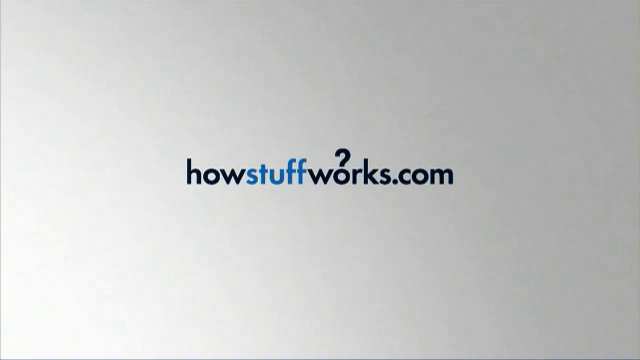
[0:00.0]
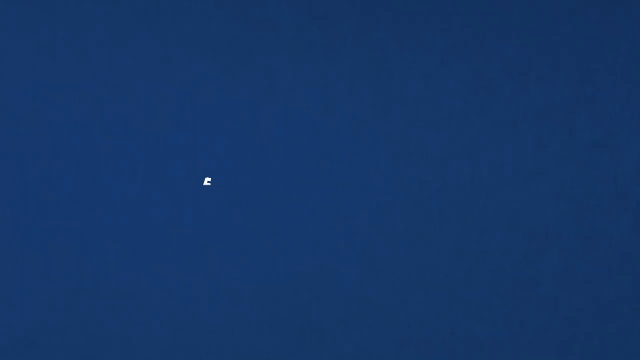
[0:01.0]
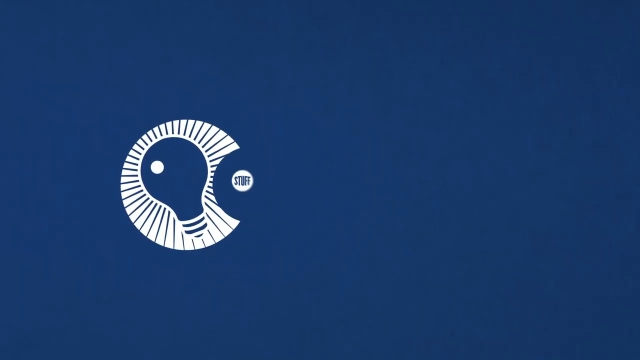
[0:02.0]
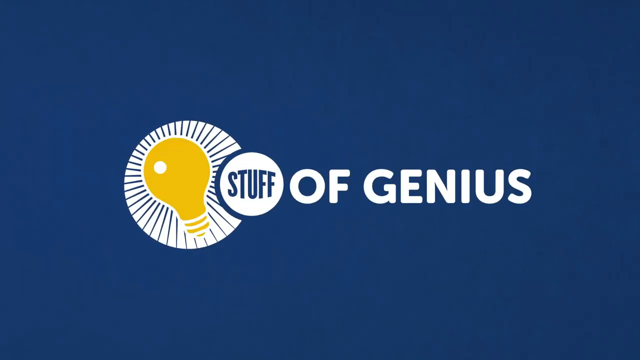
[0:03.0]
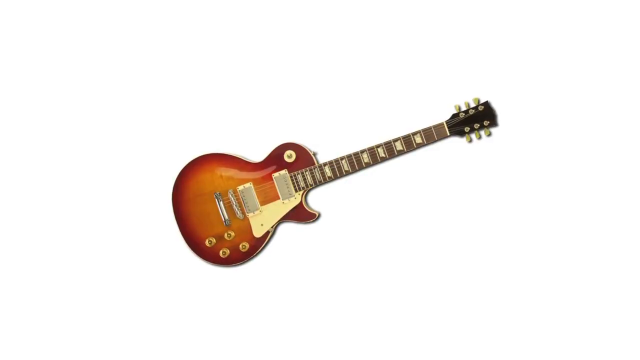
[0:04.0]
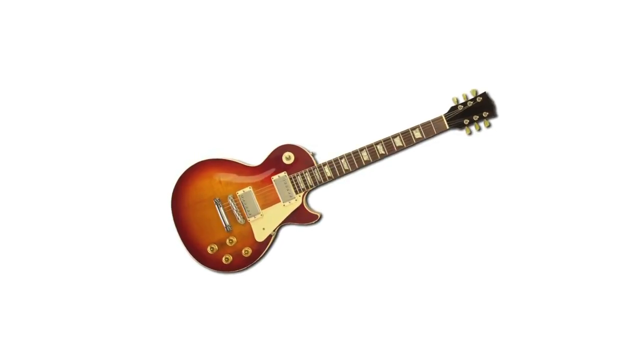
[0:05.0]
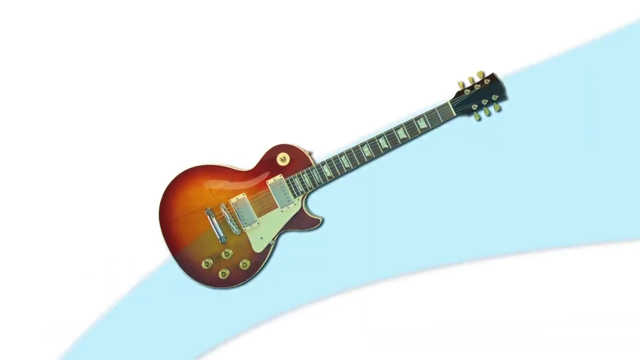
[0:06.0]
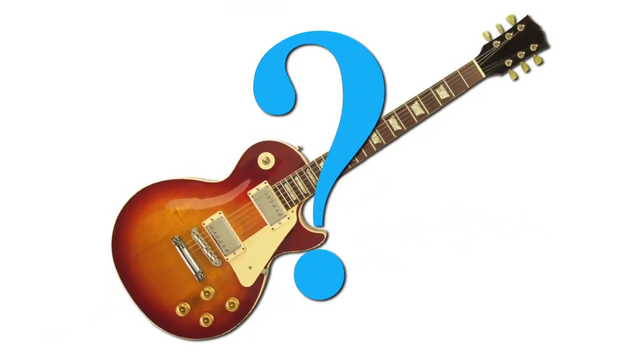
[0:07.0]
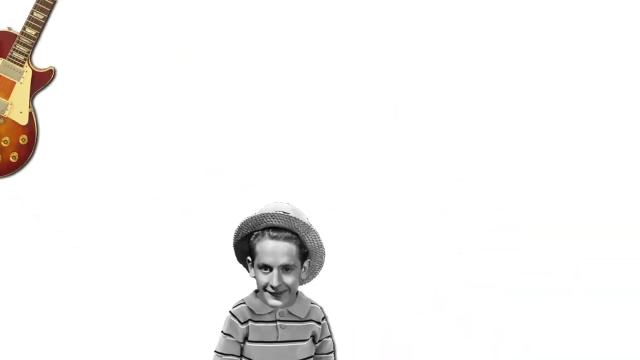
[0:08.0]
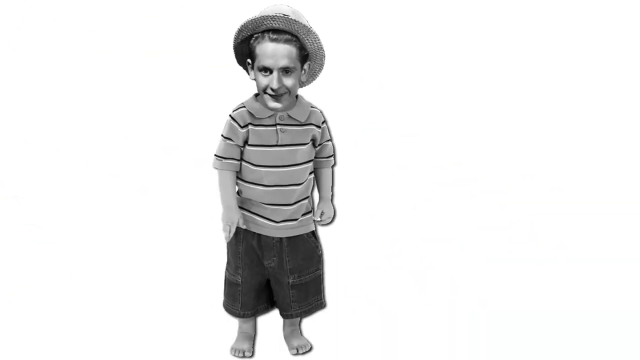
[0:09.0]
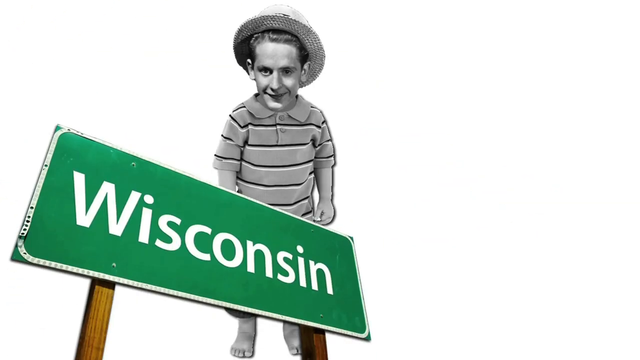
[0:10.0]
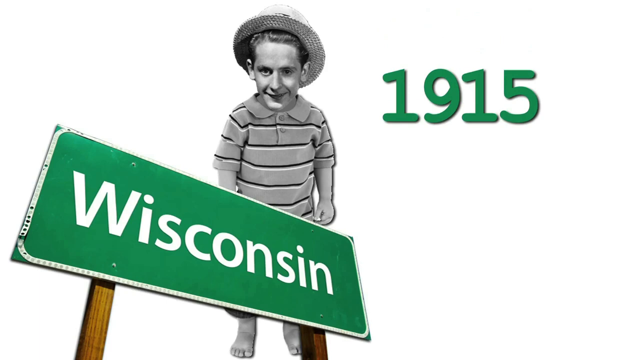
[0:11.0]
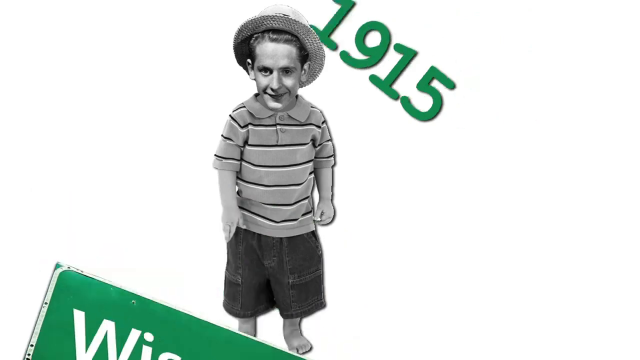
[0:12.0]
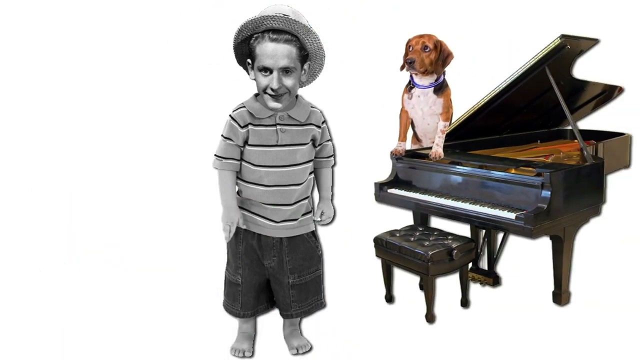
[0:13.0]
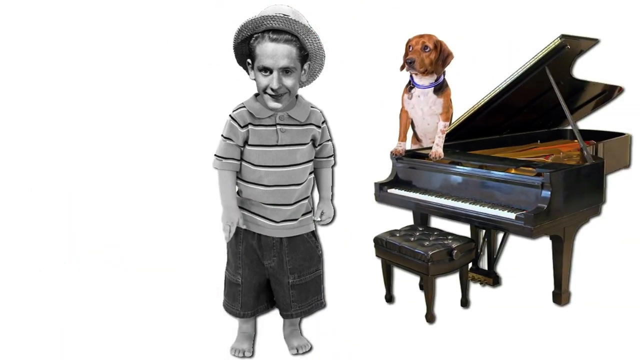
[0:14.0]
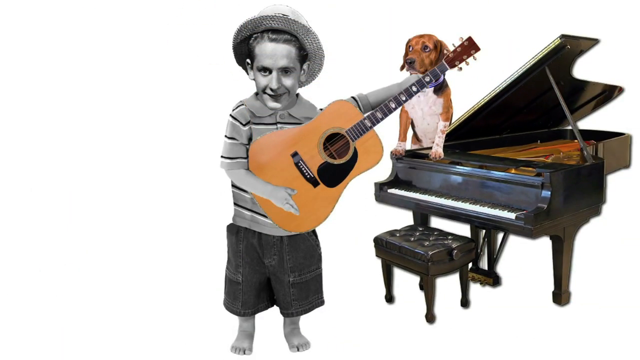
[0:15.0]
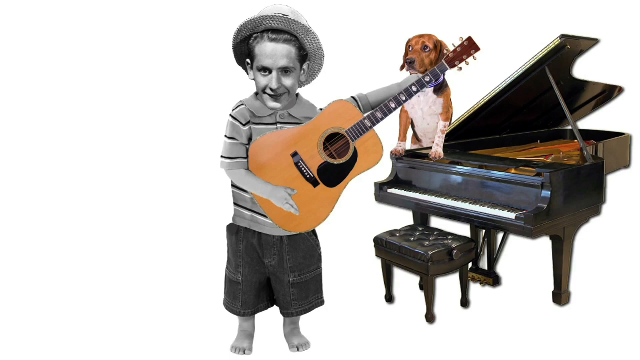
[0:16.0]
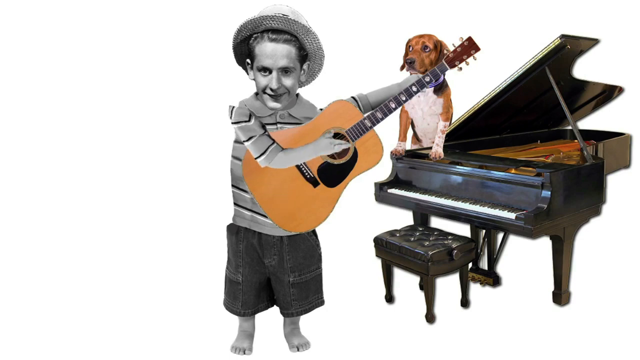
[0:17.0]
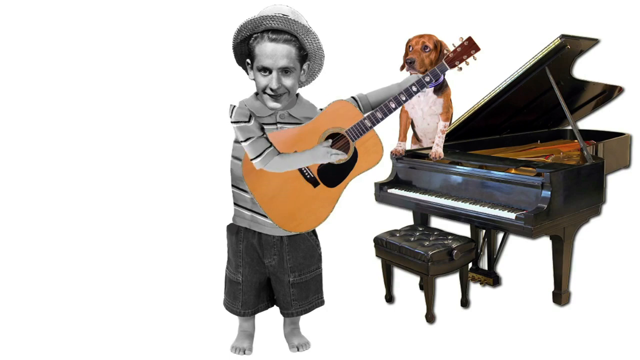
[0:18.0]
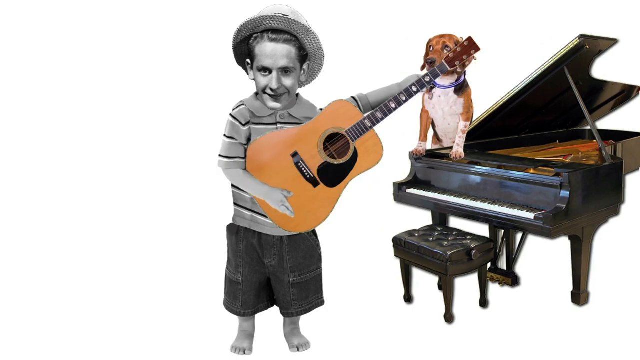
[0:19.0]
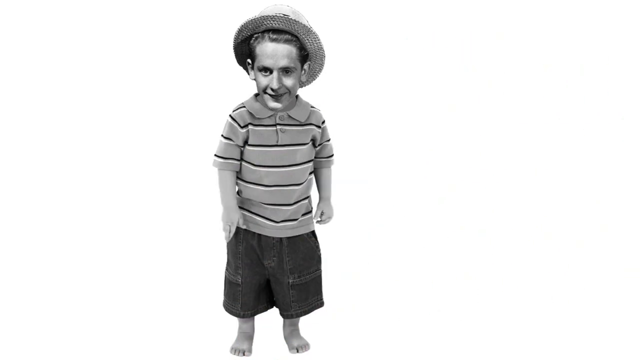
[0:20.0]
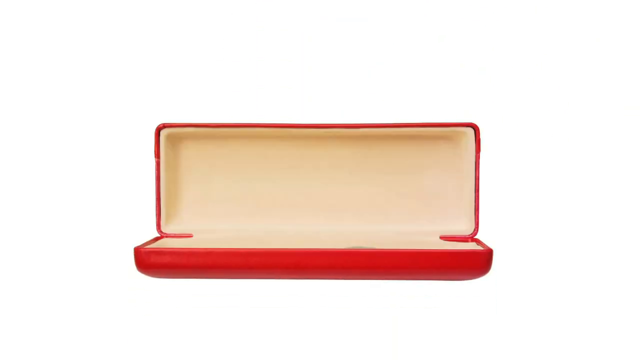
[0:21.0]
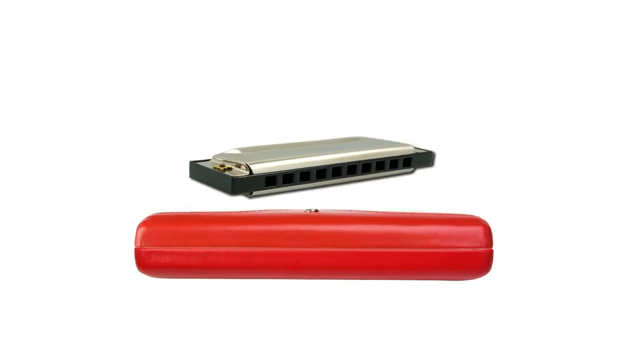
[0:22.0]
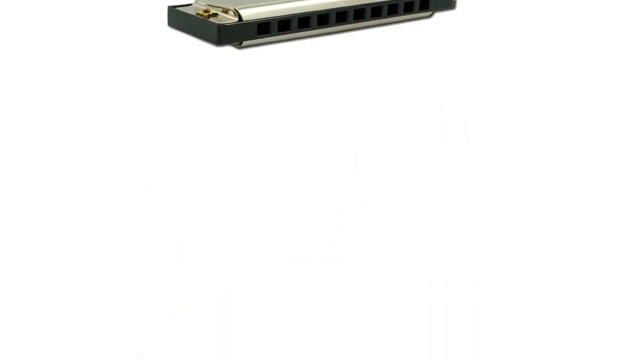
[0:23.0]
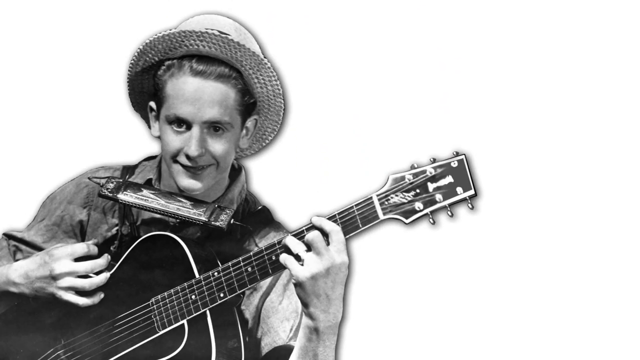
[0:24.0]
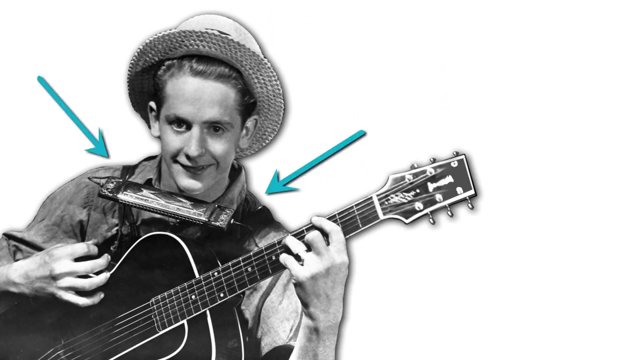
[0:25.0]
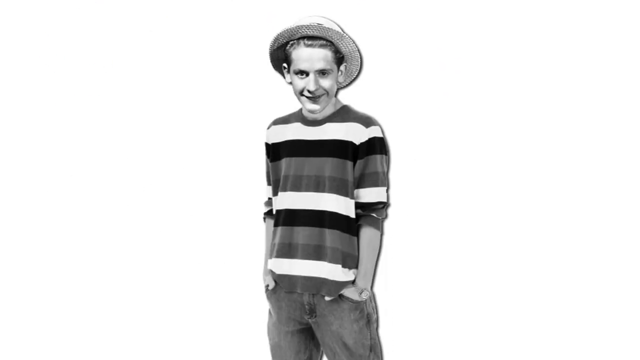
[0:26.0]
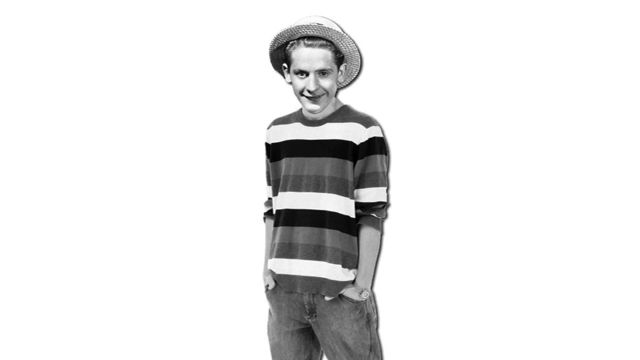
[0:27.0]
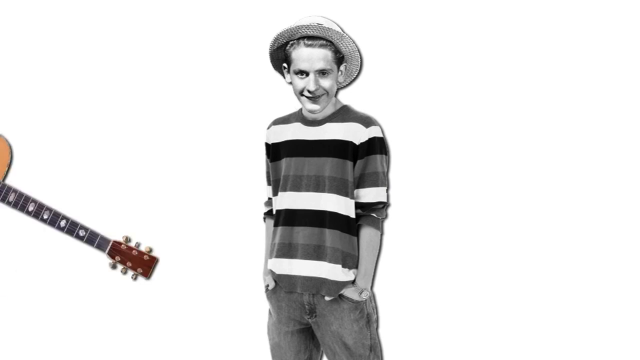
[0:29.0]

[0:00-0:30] The video begins with "HowStuffWorks.com" written in the middle of a white background, followed by a transition. The Stuff of Genius logo appears: a circle spiraling counterclockwise with a yellow light bulb in the middle, and "Stuff of Genius" written to the right of it, with half of the word "Stuff" overlapping the circle; "Stuff" is written inside a white circle. A wooden electric guitar appears in the middle of the screen and moves slightly upwards, pivoting around its middle. A blue question mark then rotates into the middle of the screen. Both images split apart off the screen, and a photo of a man's head on the body of a toddler appears. A giant green "Wisconsin" sign comes up from the bottom left, and the numbers "1915" move in from the top right of the screen. Both texts rotate off screen and disappear, and a dog on top of a piano appears from the right of the screen. A wooden guitar drops from the top of the screen into the boy's hands, and he begins to strum it with his right hand.